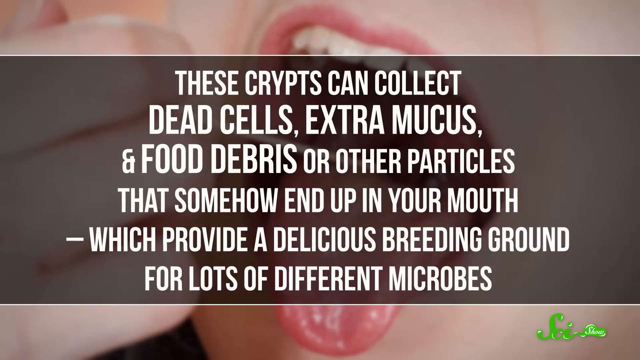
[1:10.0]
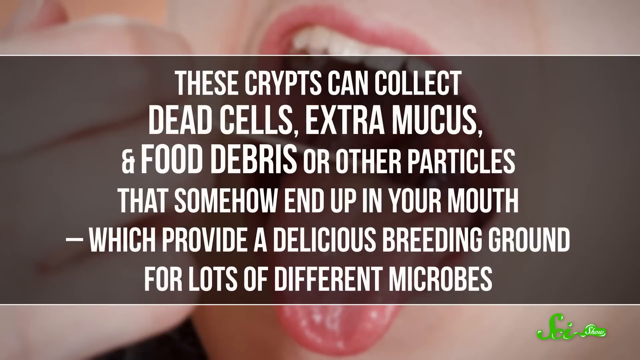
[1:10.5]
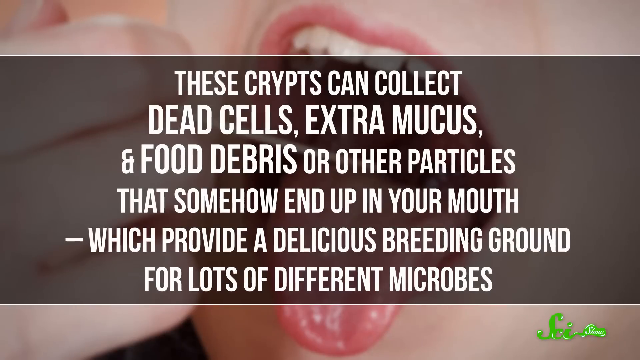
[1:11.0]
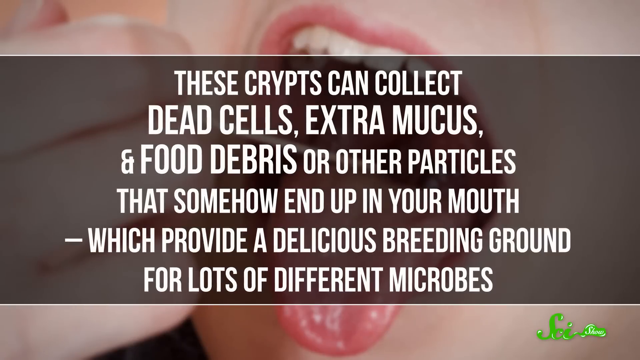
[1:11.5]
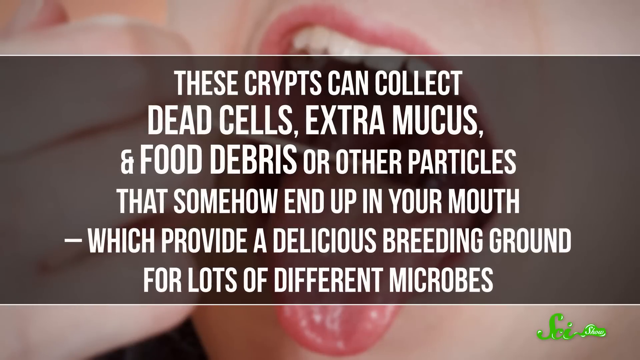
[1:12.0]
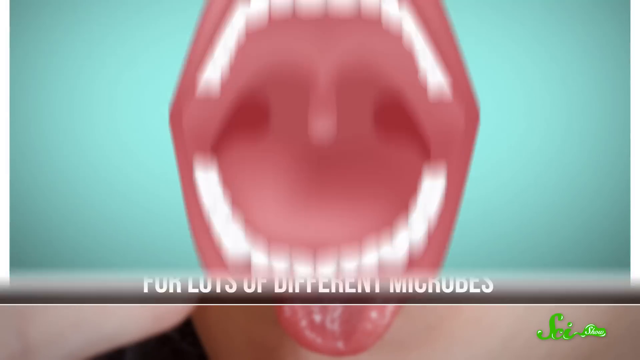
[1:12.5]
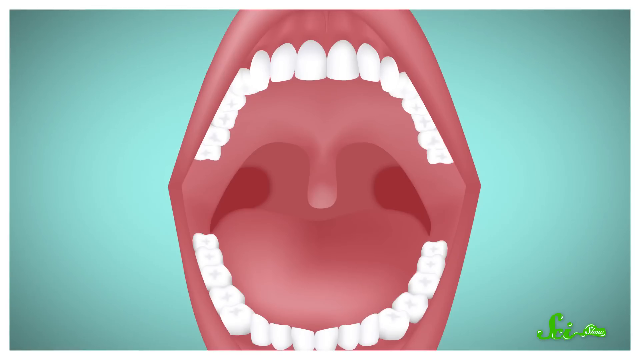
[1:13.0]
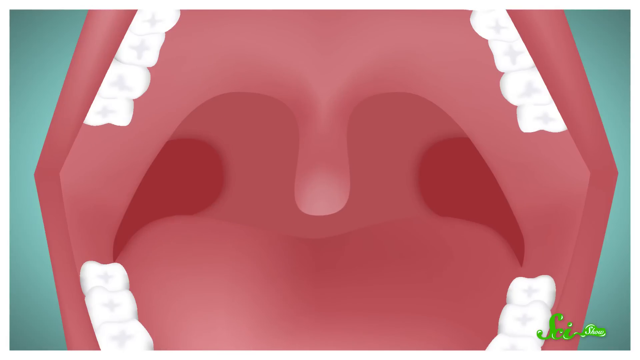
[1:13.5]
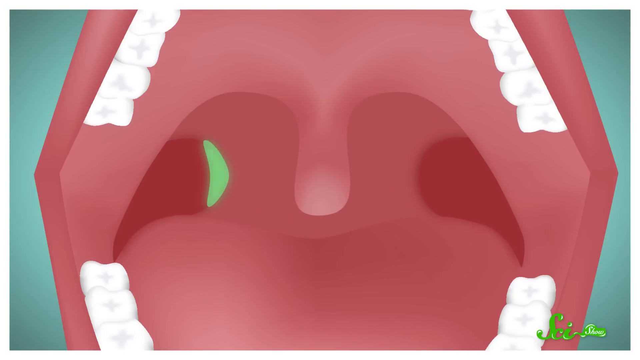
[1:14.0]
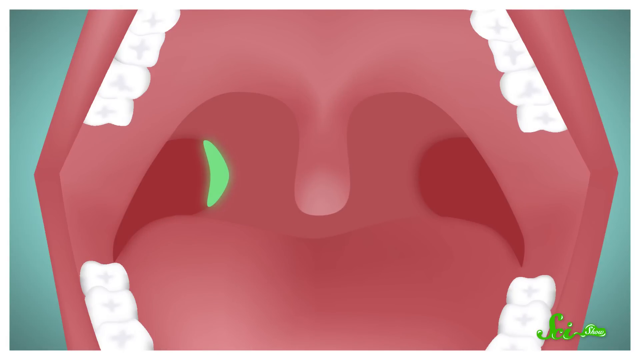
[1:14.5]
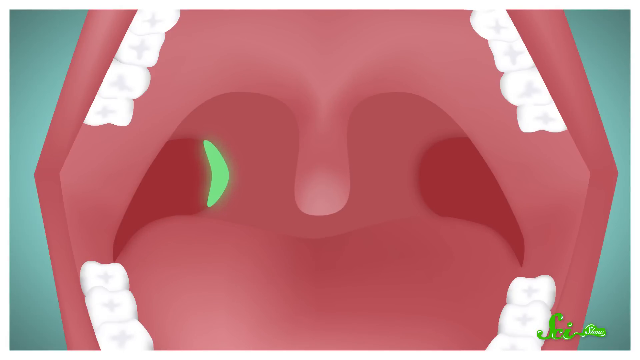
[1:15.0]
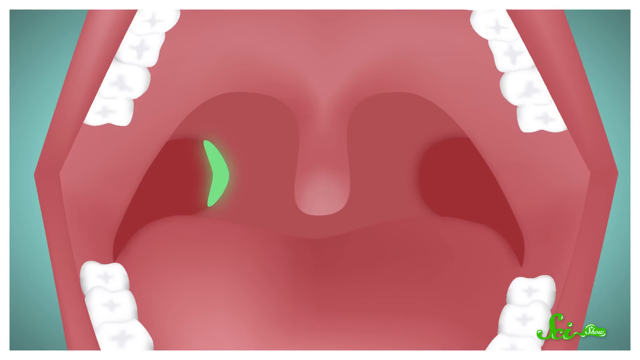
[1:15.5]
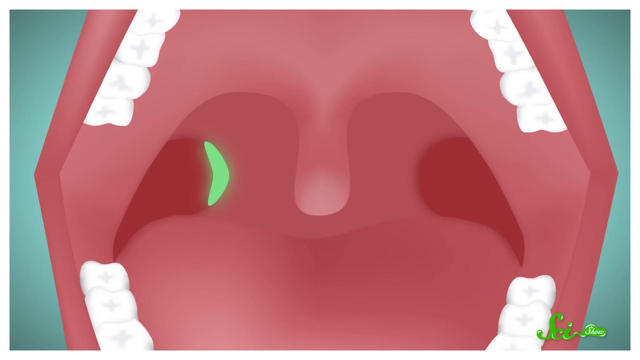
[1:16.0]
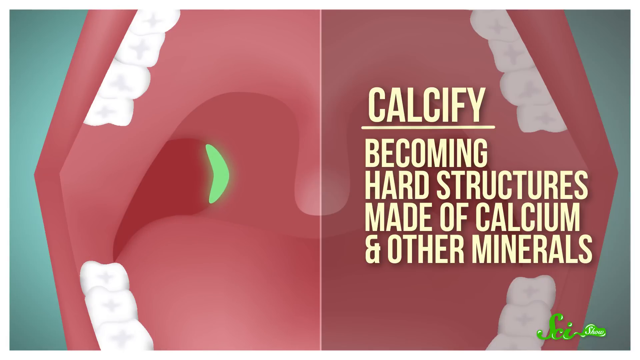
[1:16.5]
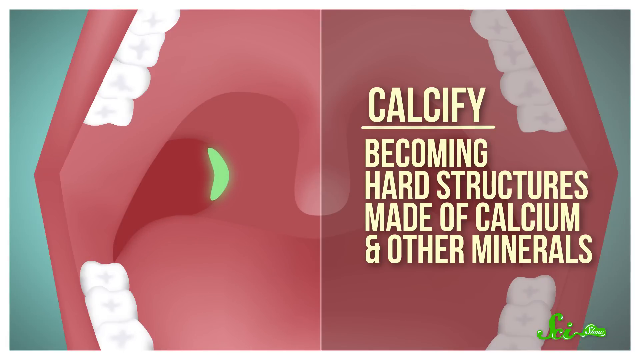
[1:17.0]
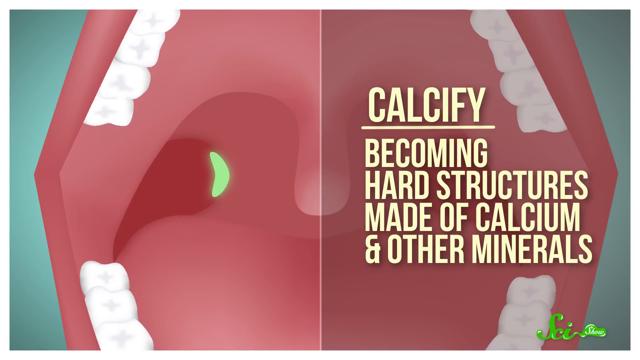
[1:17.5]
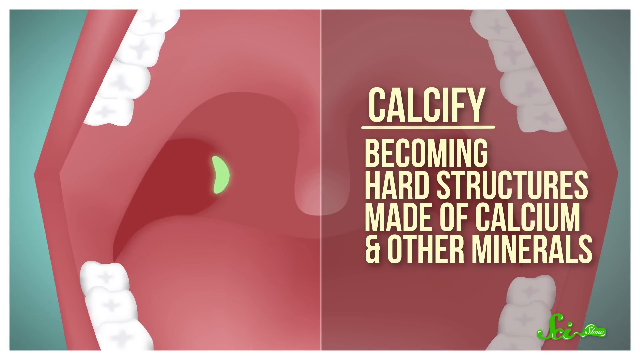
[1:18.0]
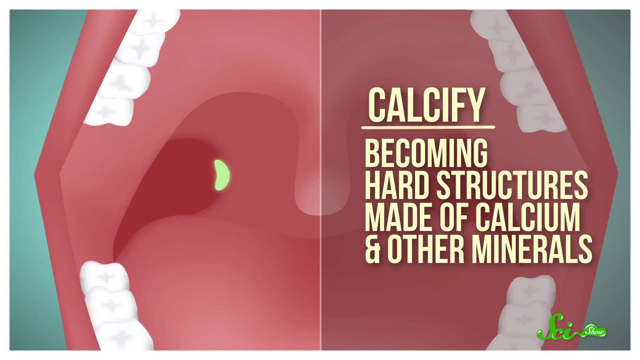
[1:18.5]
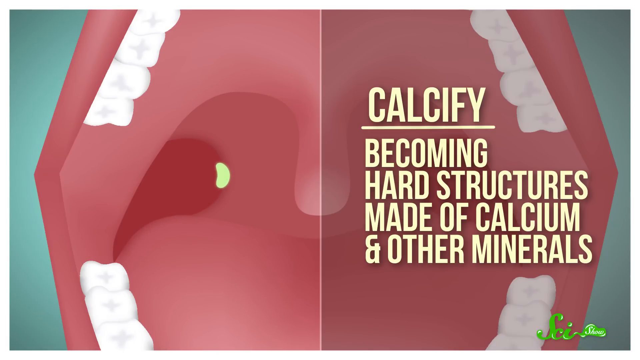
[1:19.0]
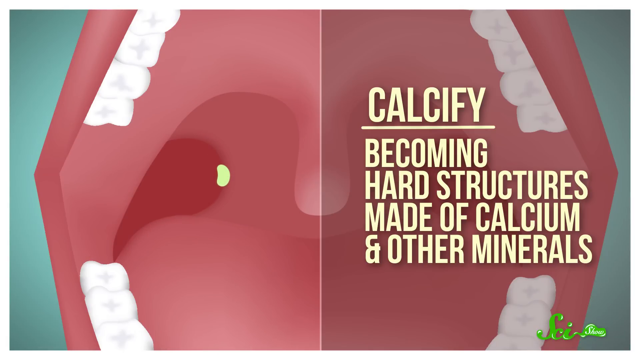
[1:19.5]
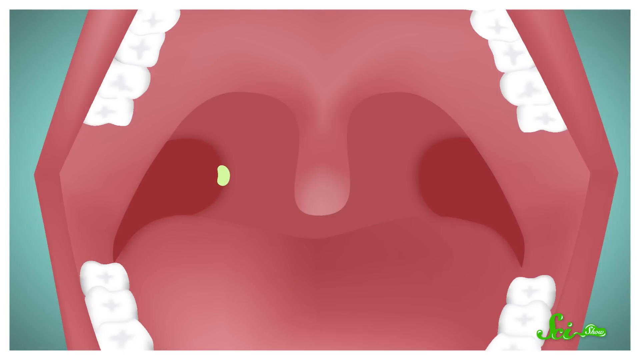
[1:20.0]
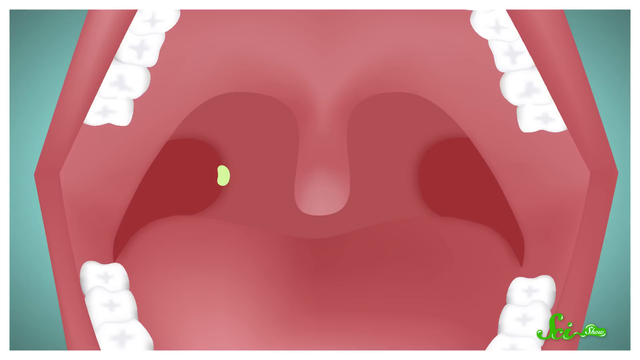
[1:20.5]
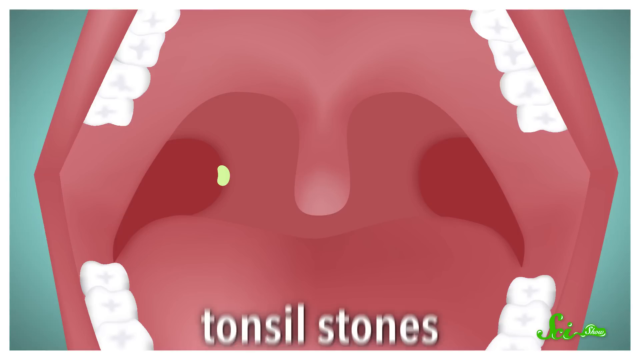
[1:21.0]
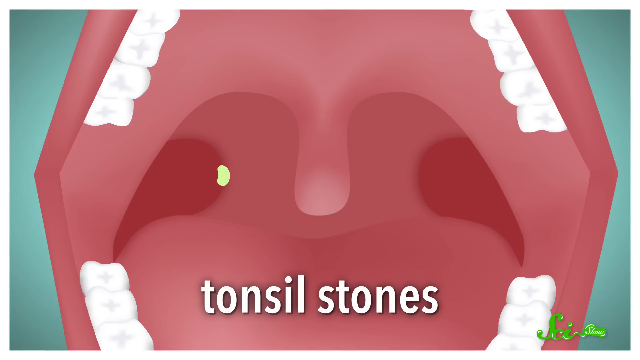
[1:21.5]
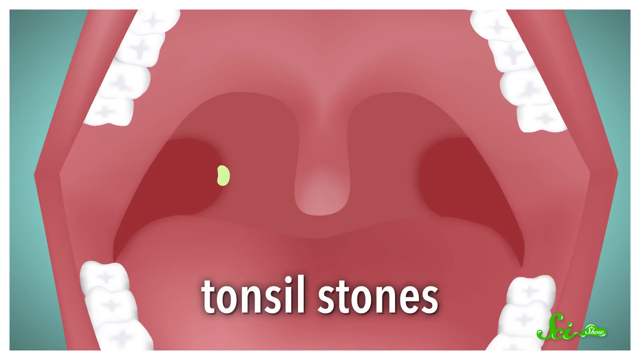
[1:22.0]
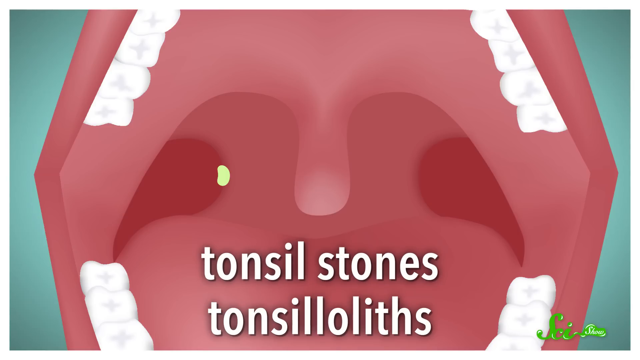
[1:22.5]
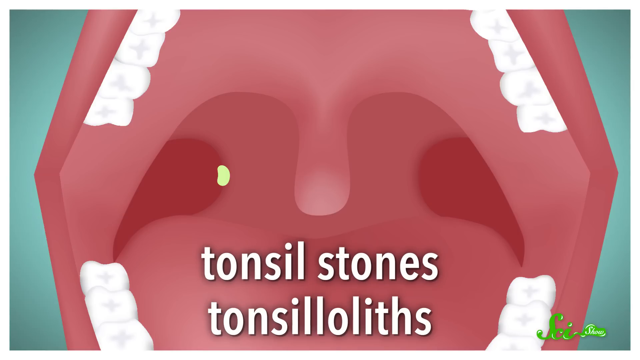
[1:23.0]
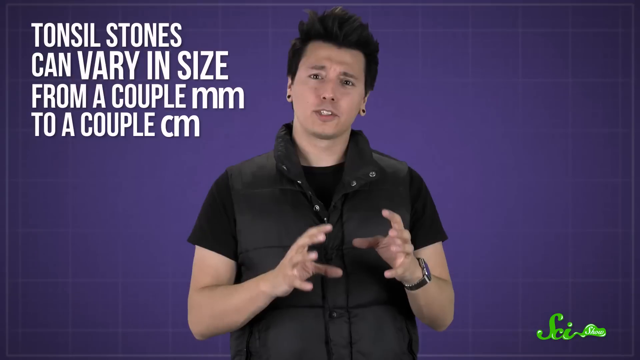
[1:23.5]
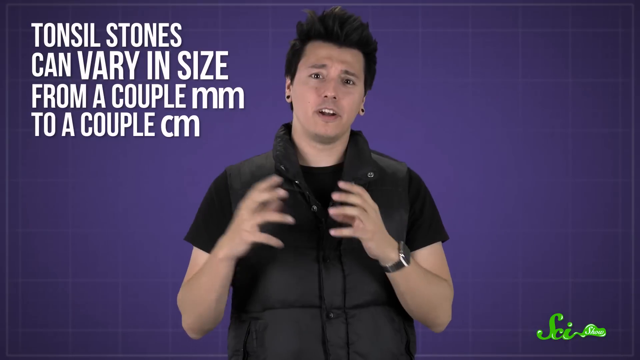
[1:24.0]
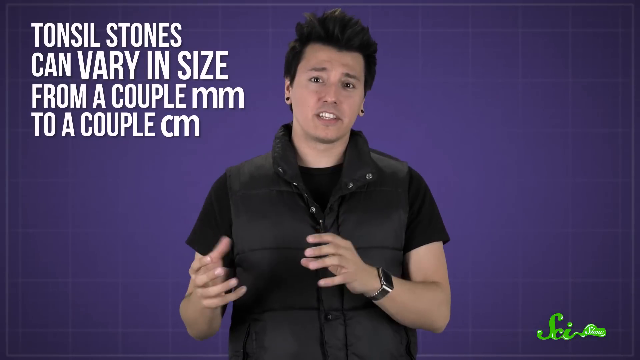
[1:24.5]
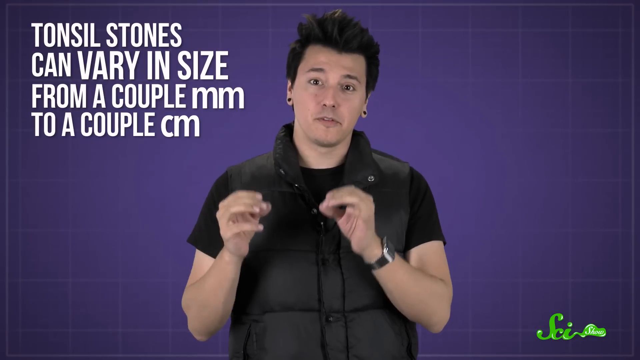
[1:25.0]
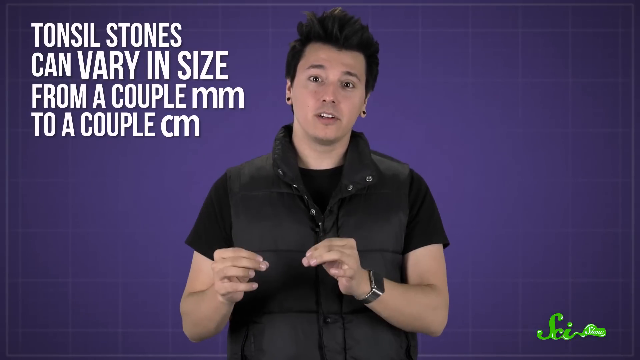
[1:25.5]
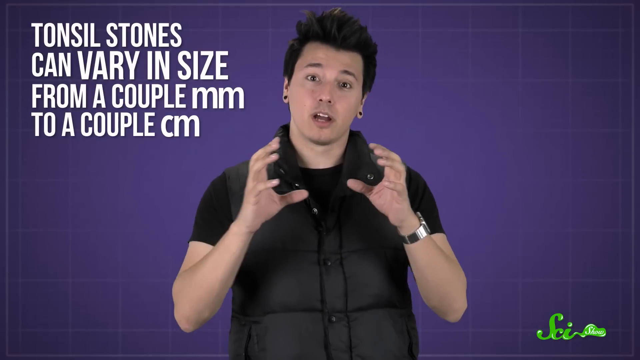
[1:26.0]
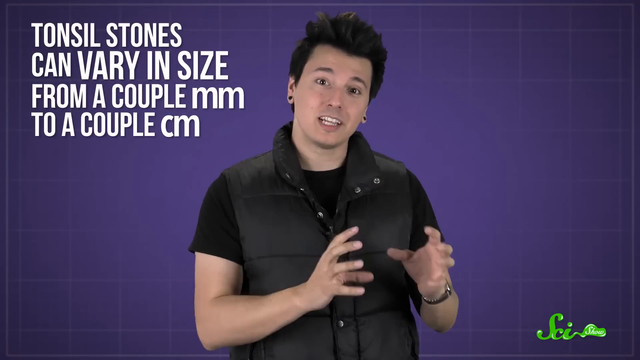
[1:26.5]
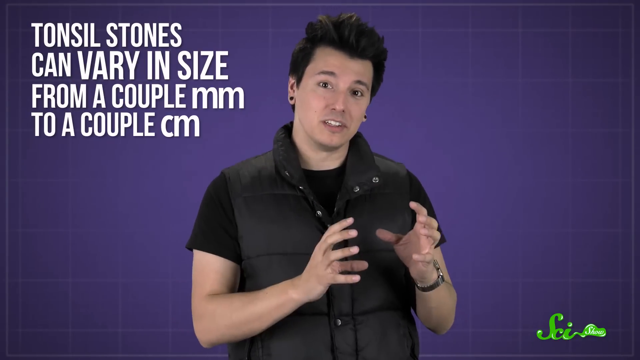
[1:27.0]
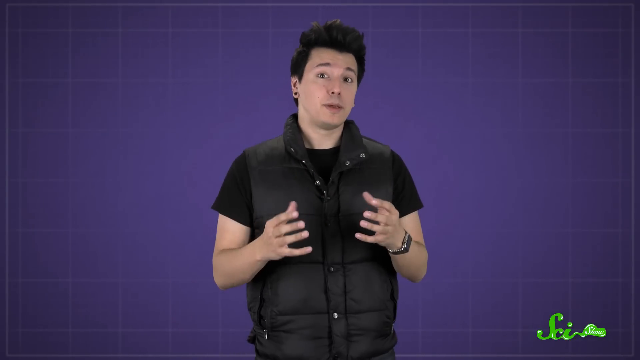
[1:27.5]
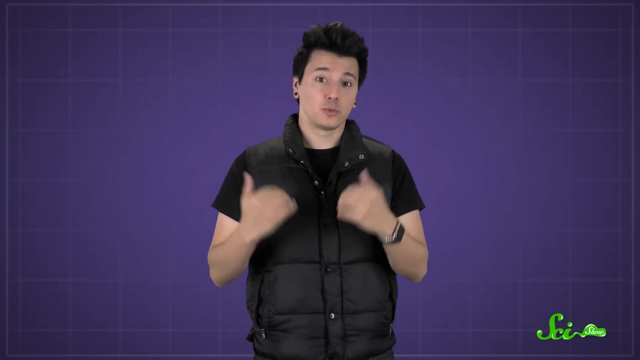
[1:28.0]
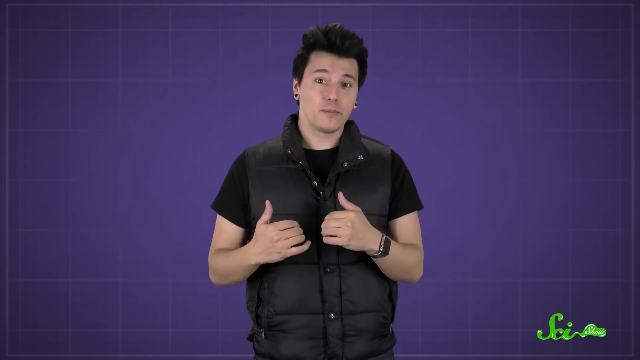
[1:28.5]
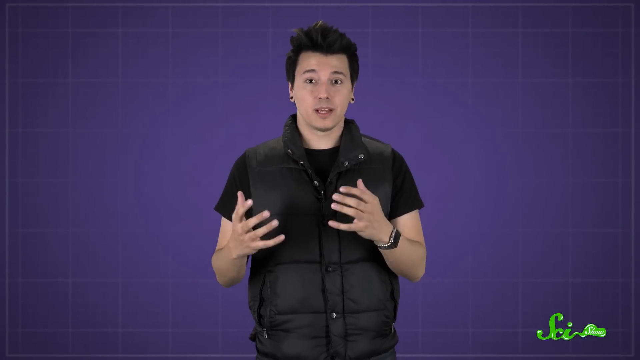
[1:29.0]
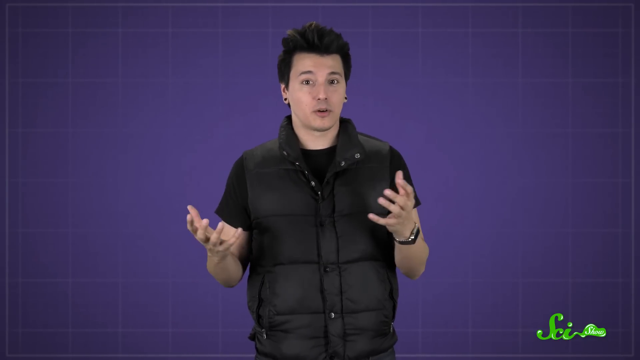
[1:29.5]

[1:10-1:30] A cartoon diagram of the mouth shows the tonsil area. Text explains that these crypts can collect material inside the mouth, and a green area carries text saying they can calcify and become hard, turning into tonsil stones. Text also says "tonsil stones can vary in size".